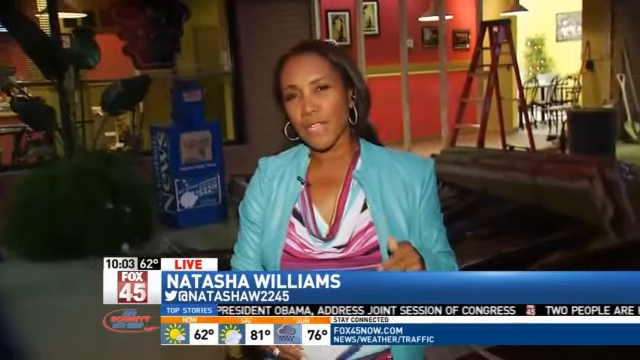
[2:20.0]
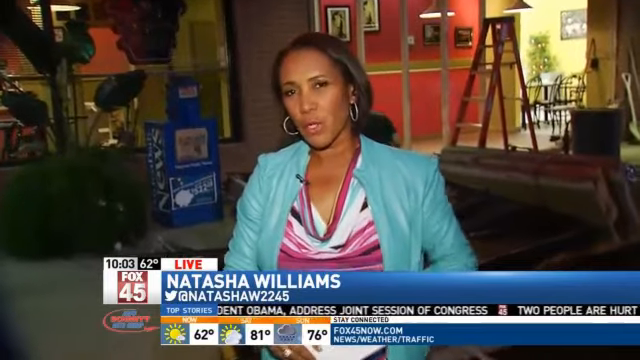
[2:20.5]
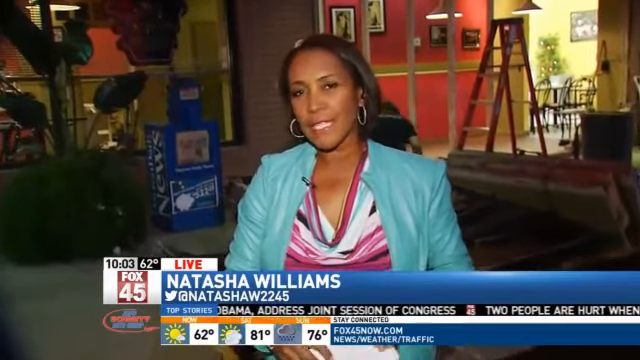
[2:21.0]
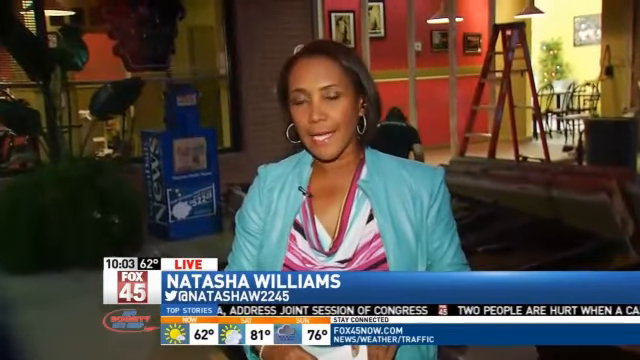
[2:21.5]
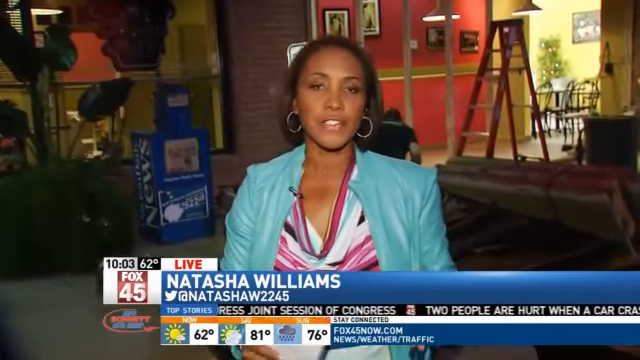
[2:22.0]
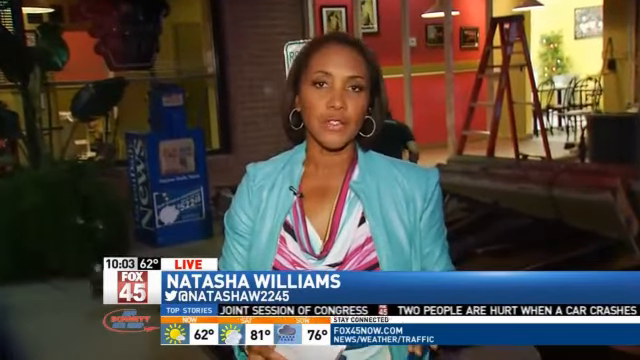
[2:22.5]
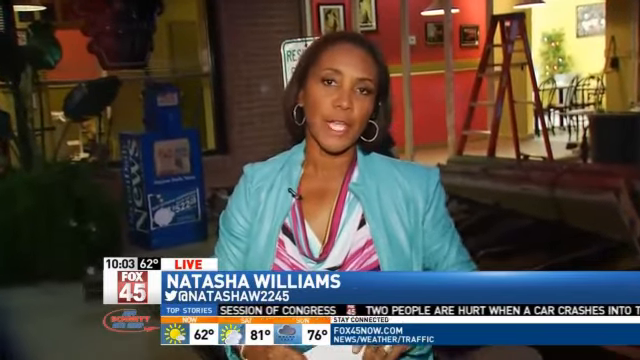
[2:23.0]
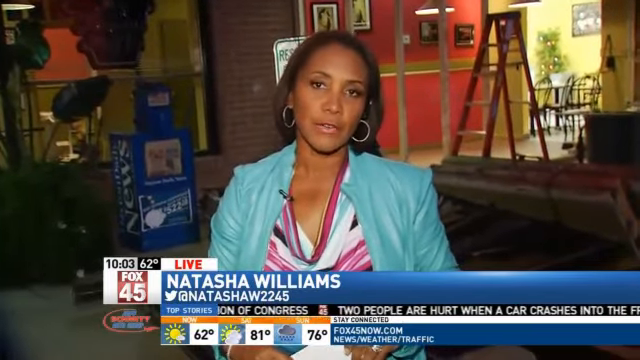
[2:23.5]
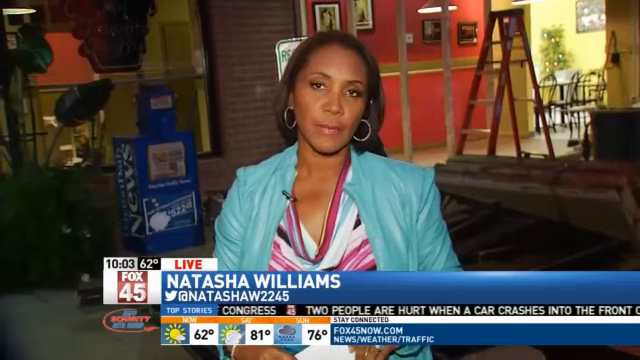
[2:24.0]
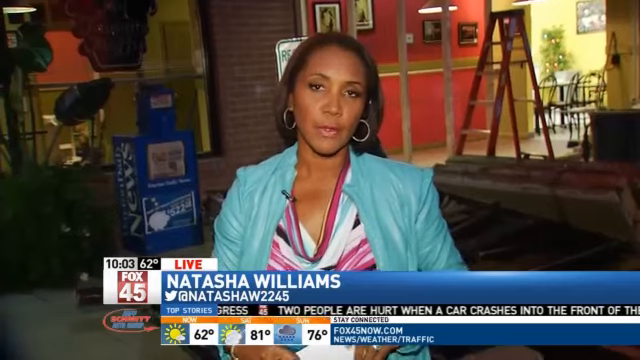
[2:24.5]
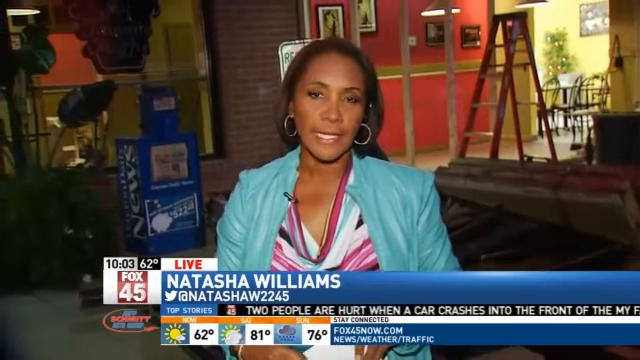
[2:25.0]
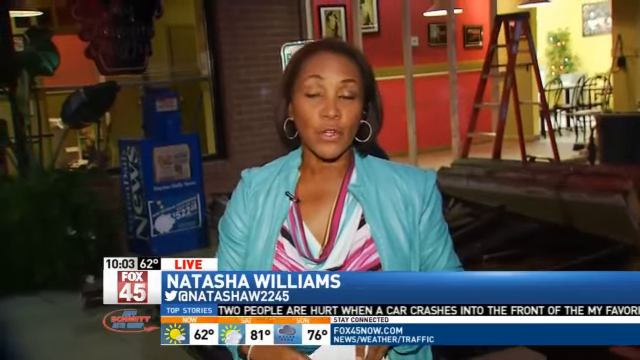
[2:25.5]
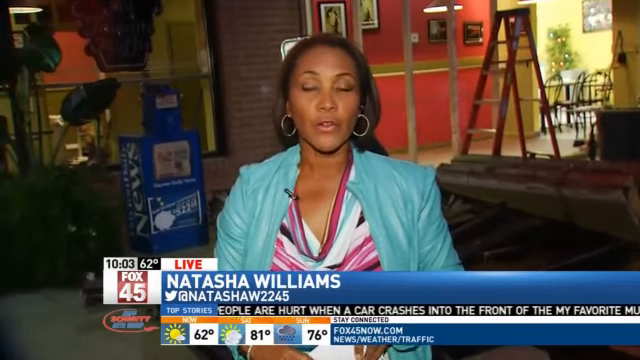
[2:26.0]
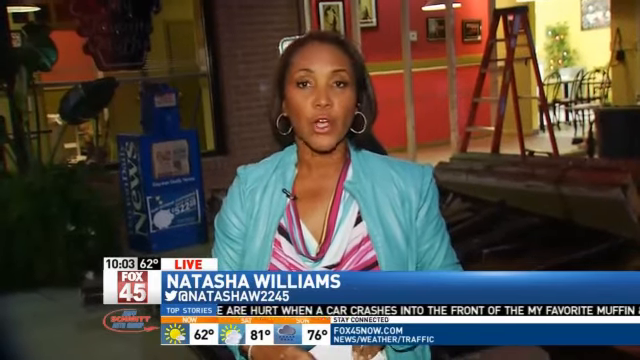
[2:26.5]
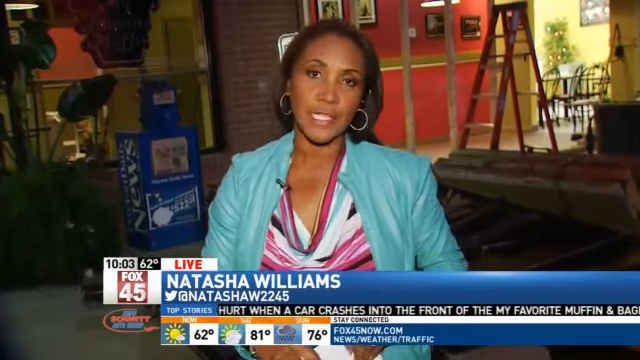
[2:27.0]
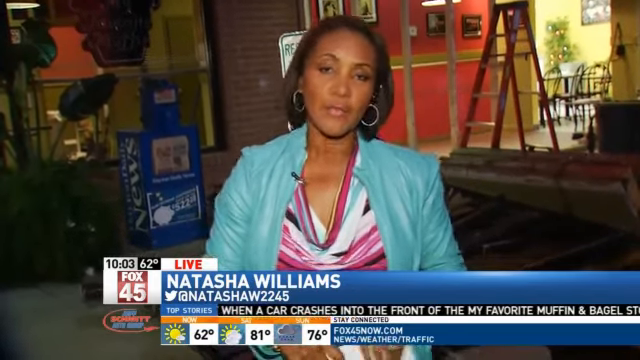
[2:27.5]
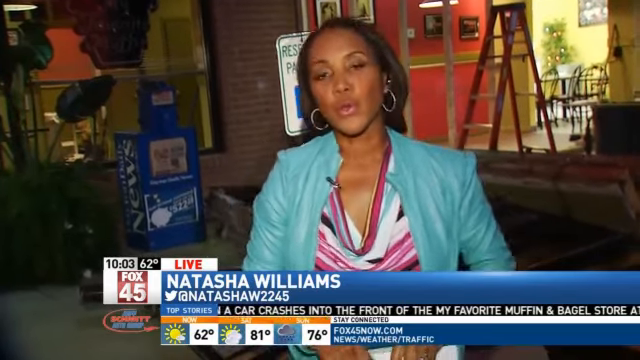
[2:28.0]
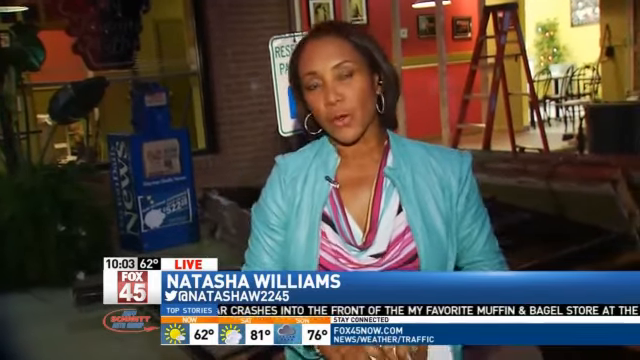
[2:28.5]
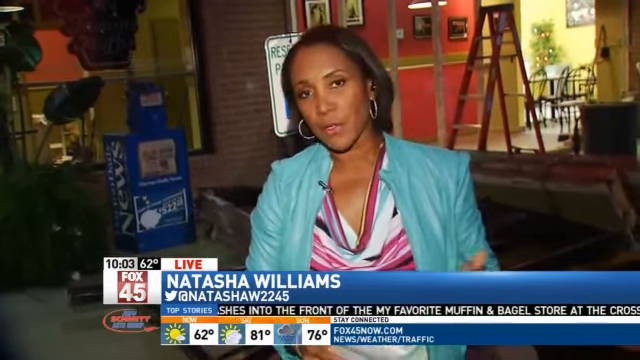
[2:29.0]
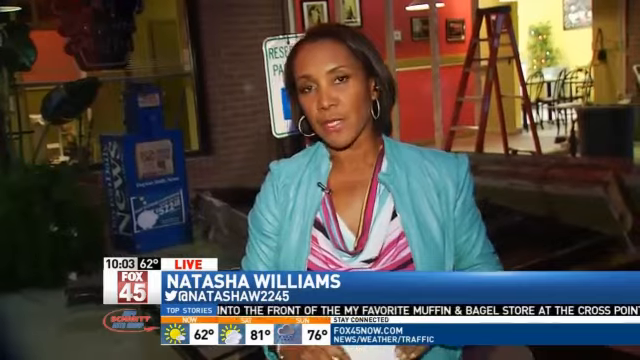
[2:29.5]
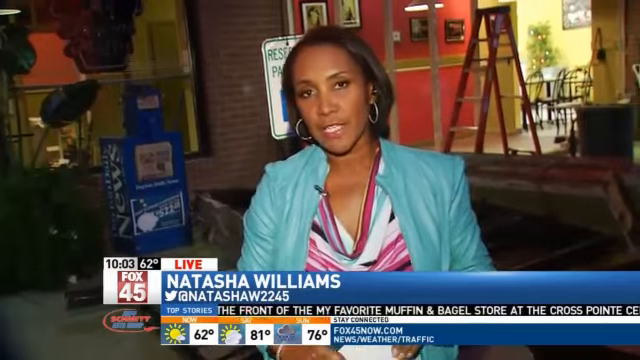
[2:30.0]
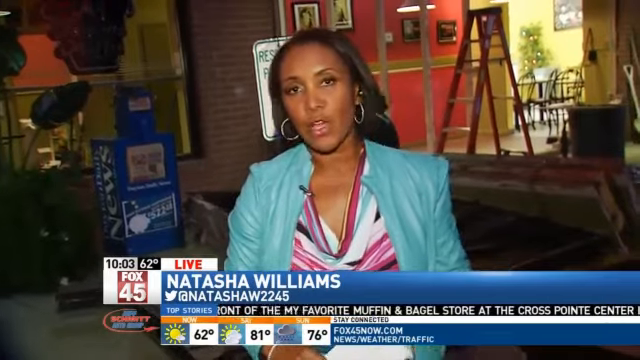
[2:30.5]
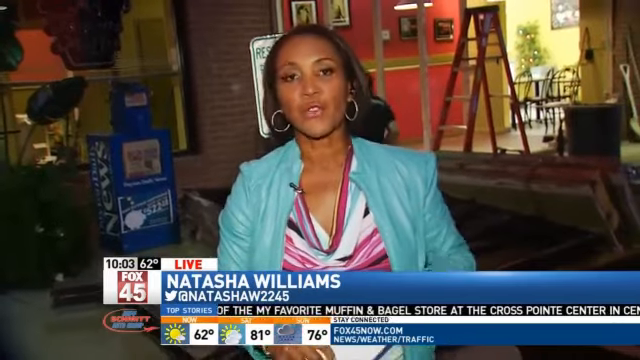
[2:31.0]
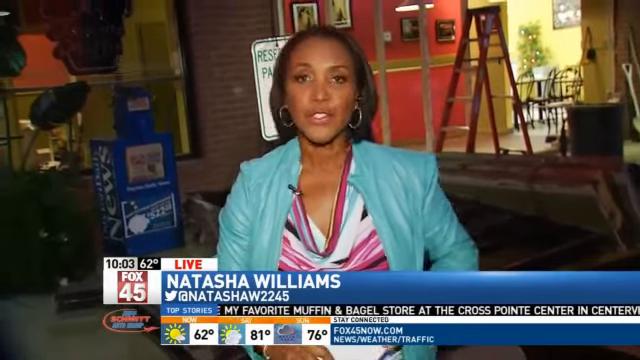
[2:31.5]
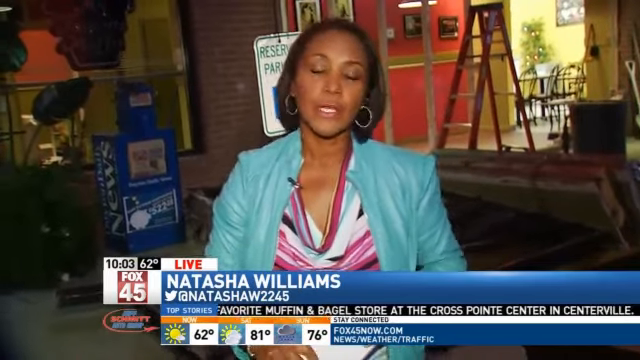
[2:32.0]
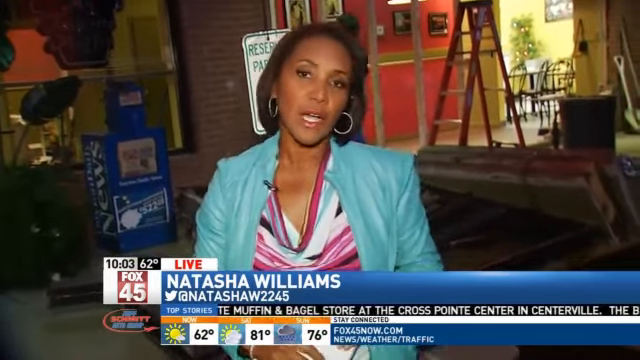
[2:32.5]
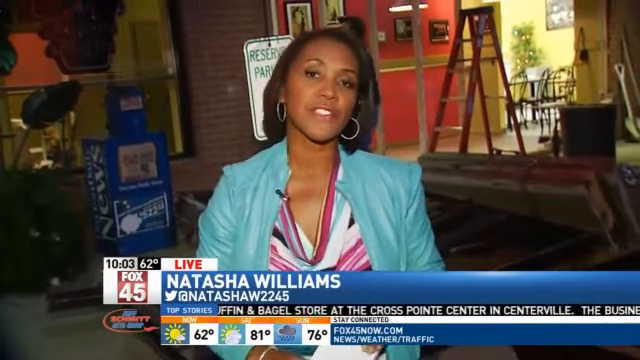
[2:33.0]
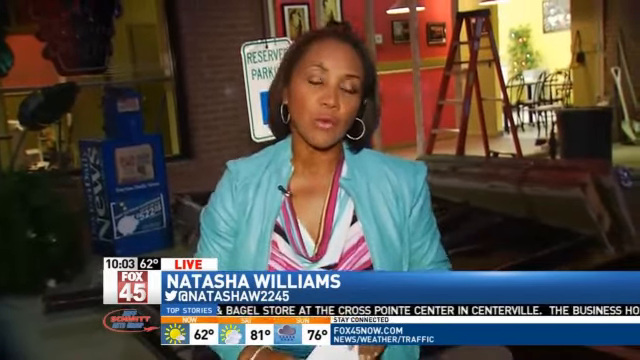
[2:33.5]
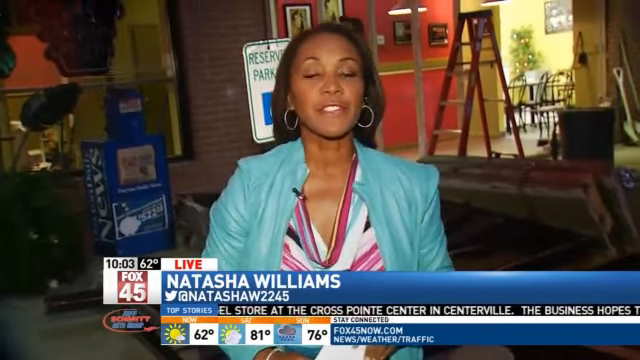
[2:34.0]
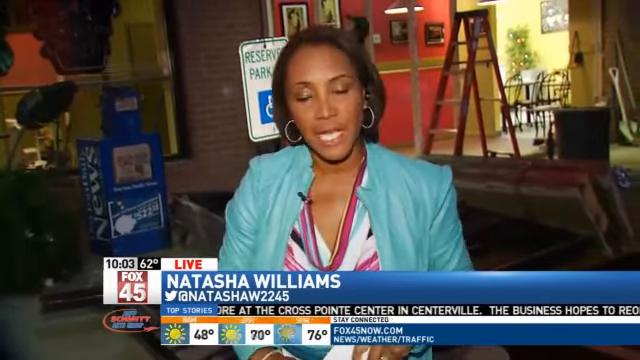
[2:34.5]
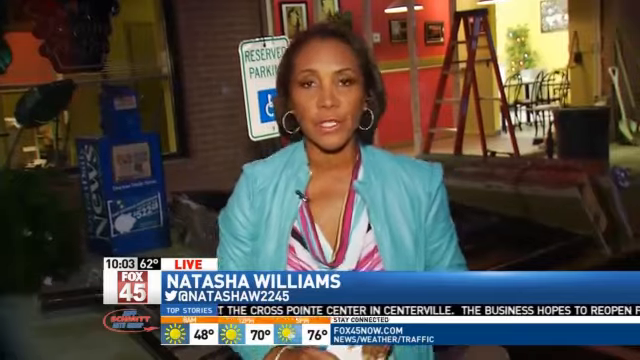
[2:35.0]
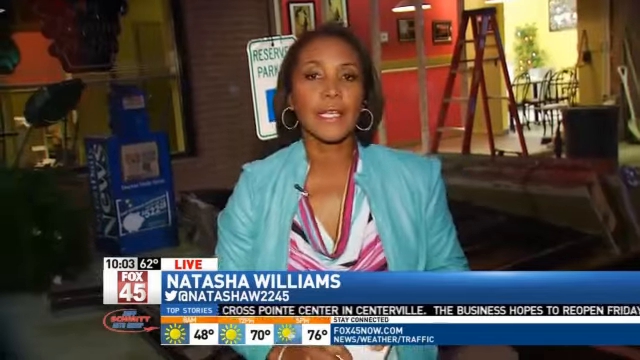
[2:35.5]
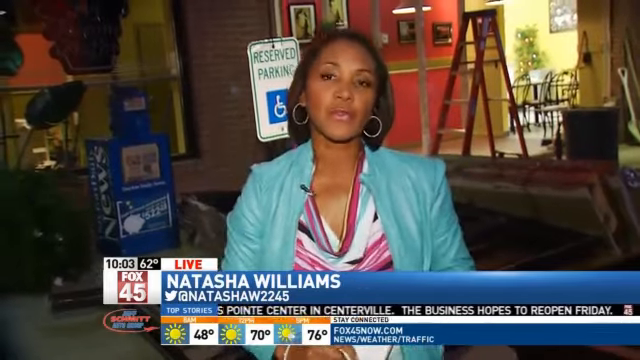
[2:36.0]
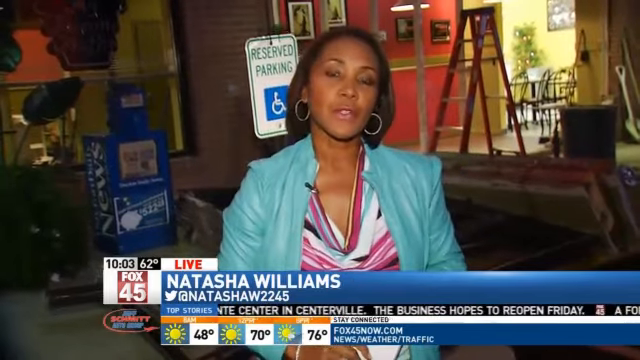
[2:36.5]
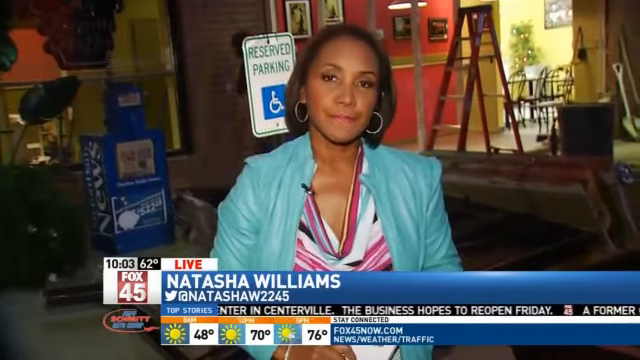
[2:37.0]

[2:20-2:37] Fox 45 shows a live report from Natasha Williams, the on-field news reporter, standing in front of the accident scene where an SUV hit a restaurant. Directly behind her, the reserve parking sign is still standing, but the damage to the shop is visible. Men are working inside, building beams. Untouched parts remain, such as the lights hanging down and the red wall with pictures hung on it.